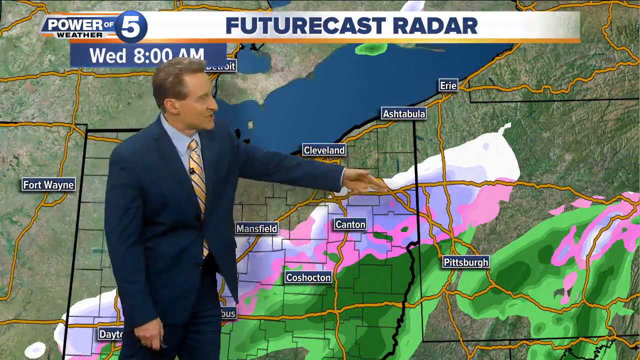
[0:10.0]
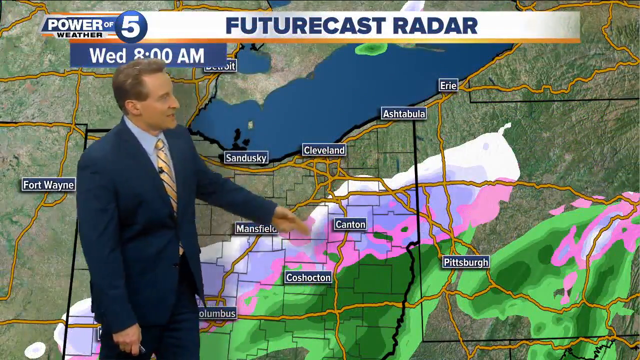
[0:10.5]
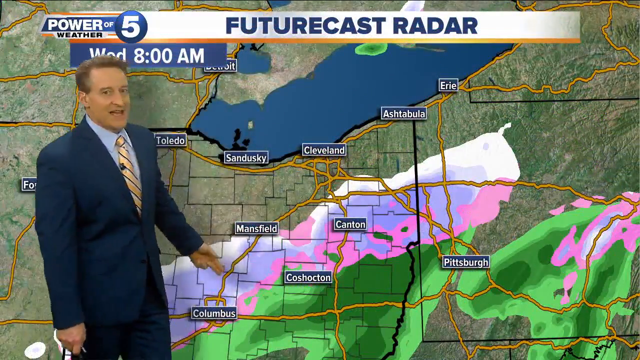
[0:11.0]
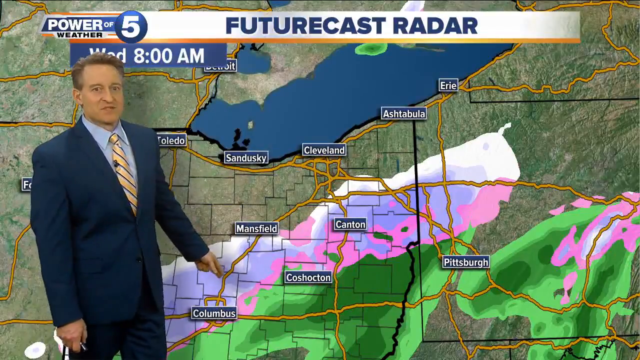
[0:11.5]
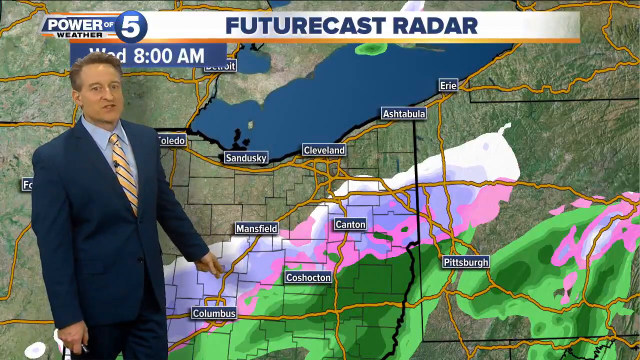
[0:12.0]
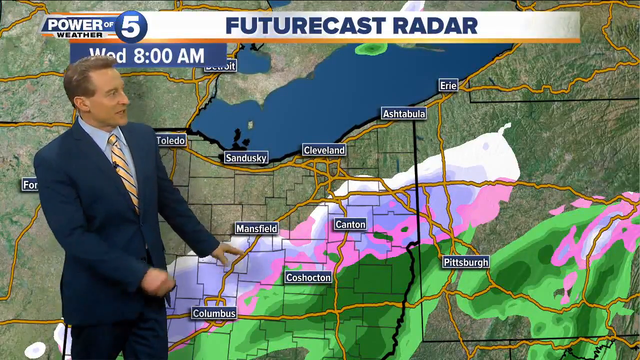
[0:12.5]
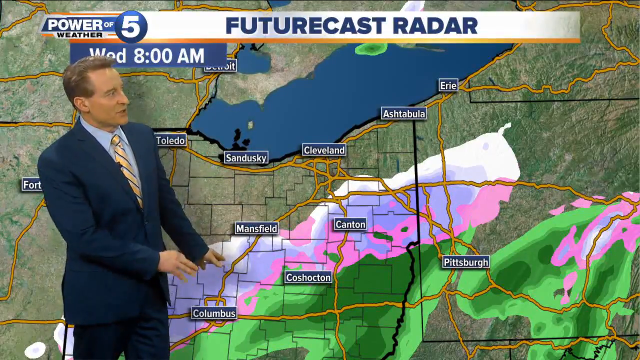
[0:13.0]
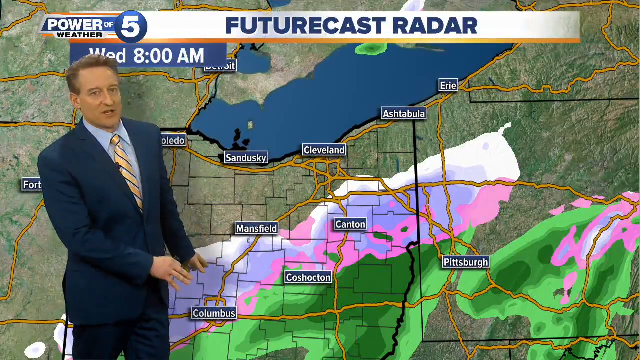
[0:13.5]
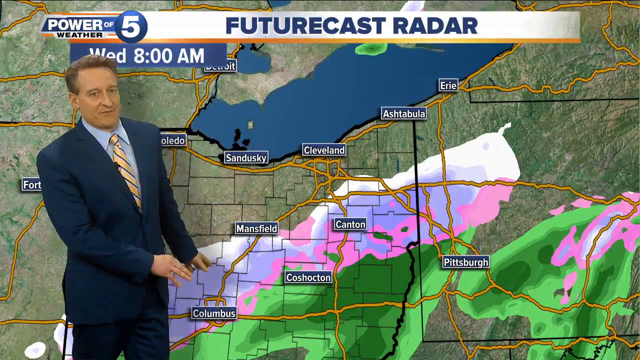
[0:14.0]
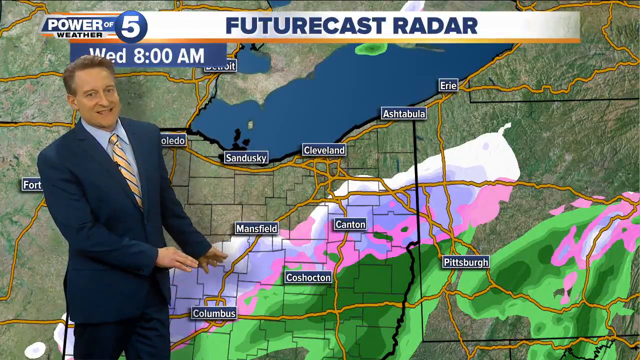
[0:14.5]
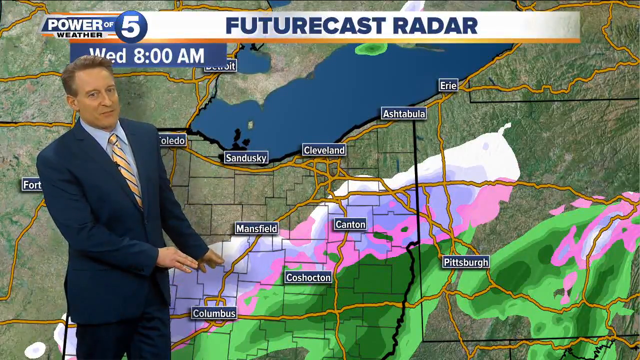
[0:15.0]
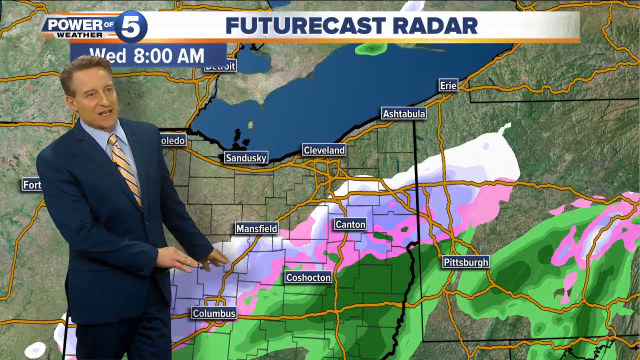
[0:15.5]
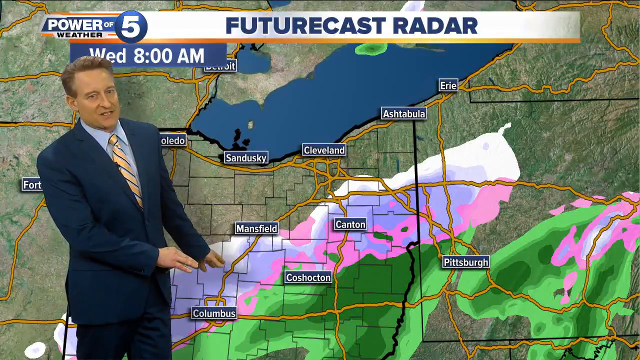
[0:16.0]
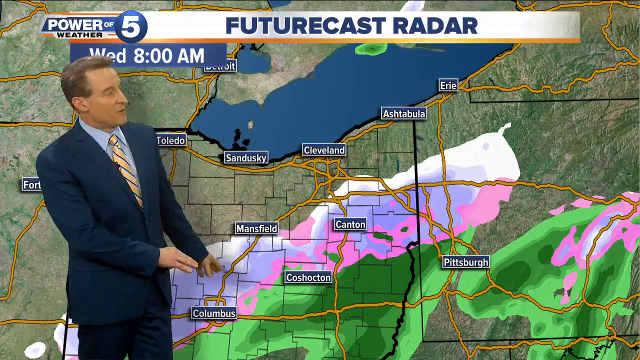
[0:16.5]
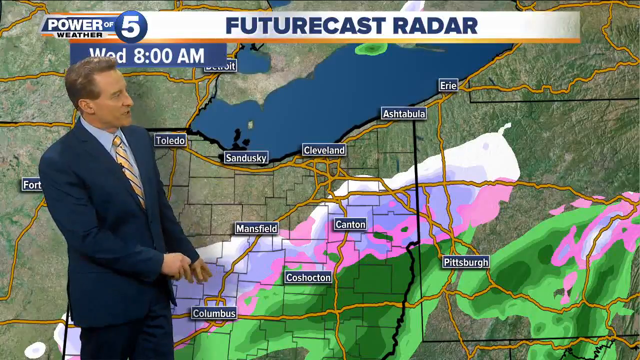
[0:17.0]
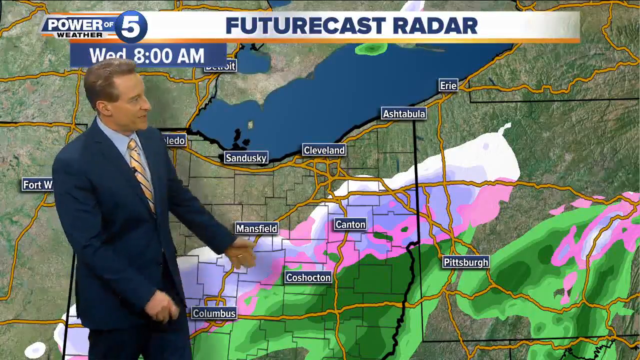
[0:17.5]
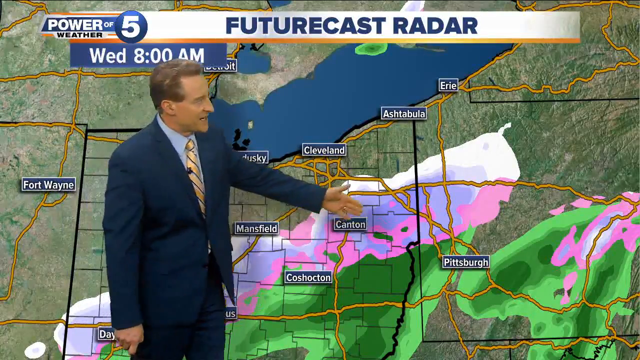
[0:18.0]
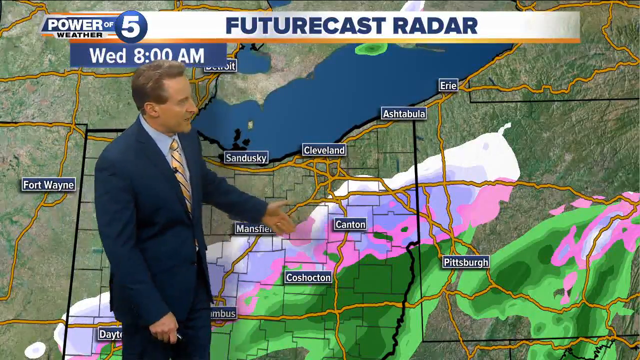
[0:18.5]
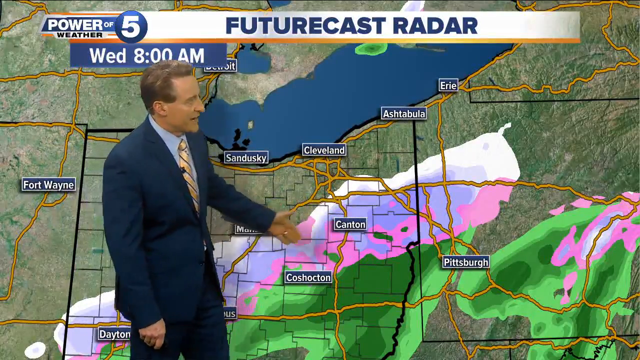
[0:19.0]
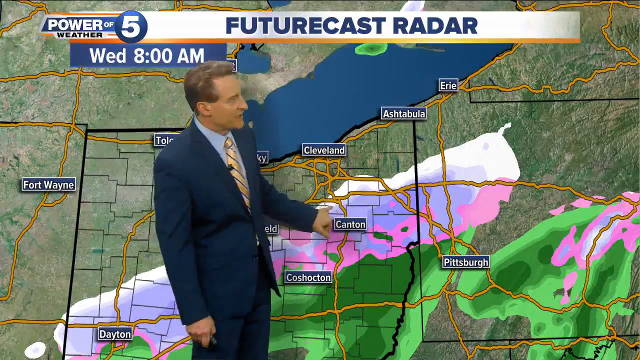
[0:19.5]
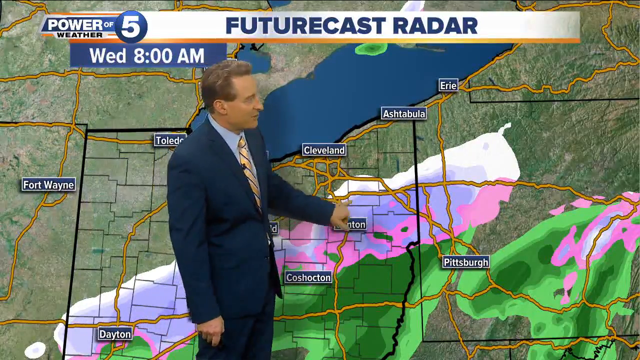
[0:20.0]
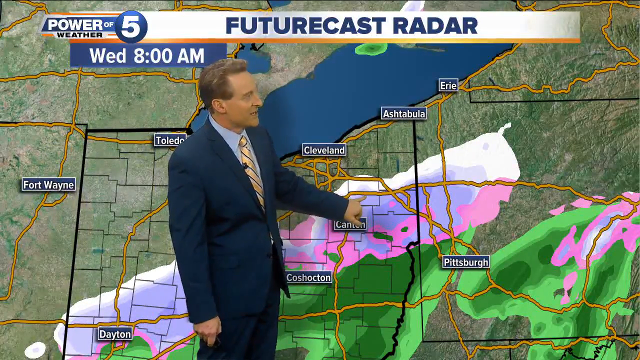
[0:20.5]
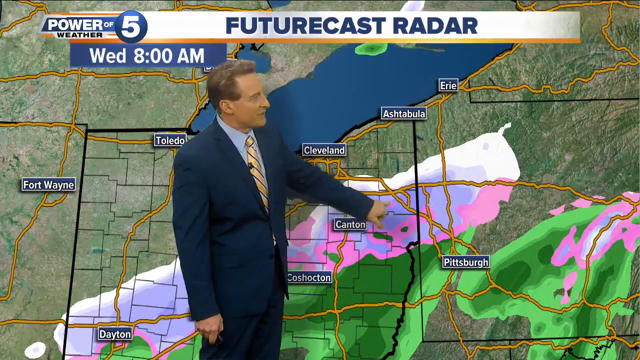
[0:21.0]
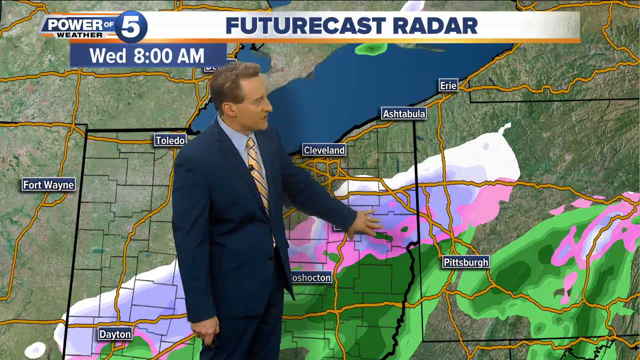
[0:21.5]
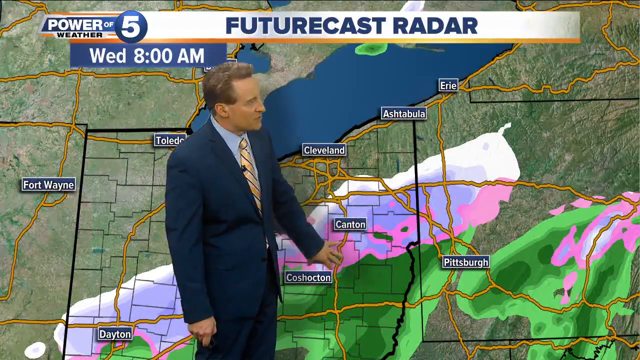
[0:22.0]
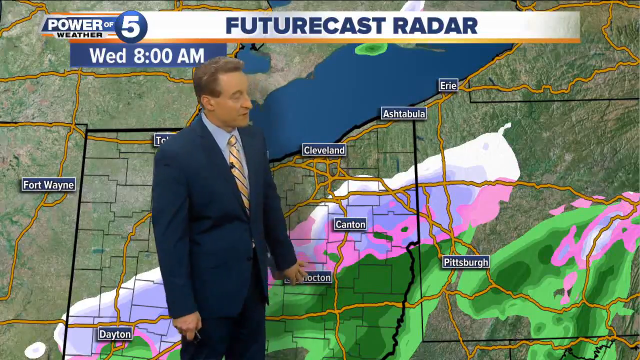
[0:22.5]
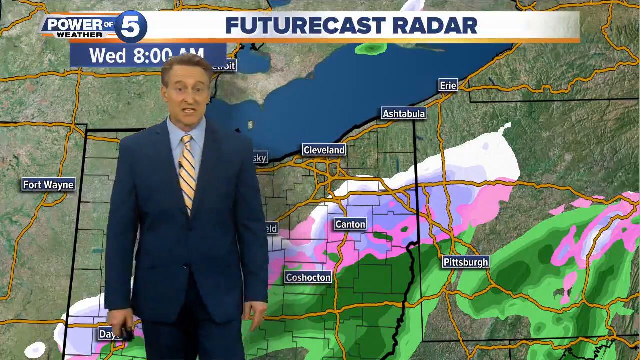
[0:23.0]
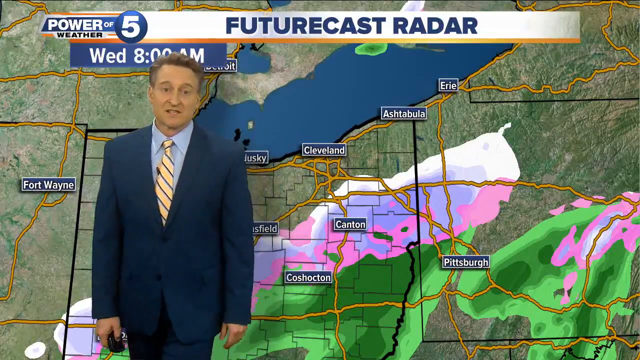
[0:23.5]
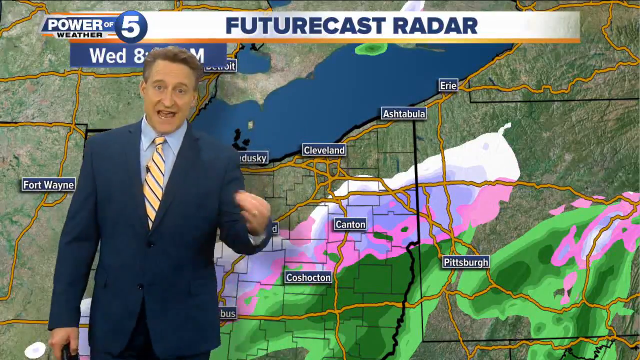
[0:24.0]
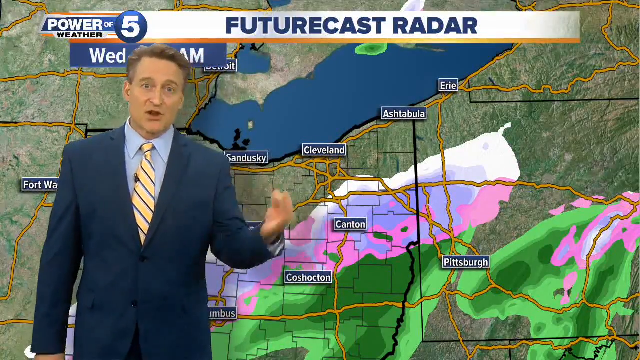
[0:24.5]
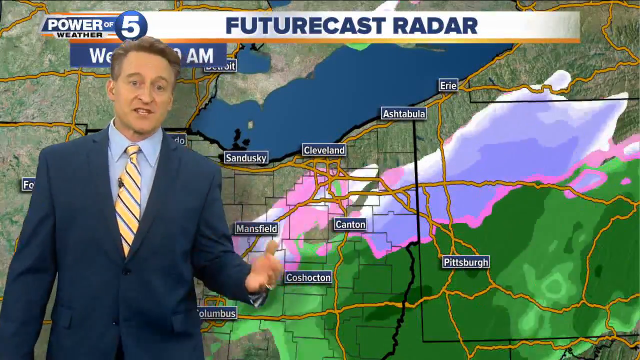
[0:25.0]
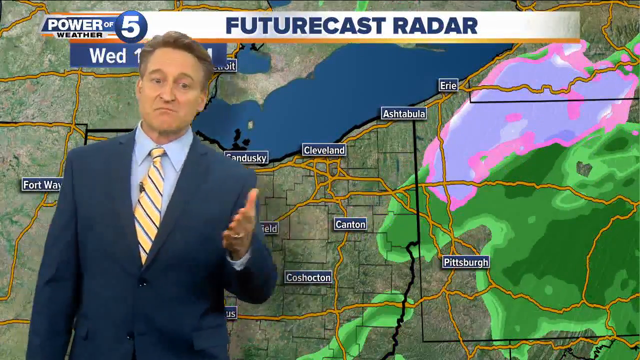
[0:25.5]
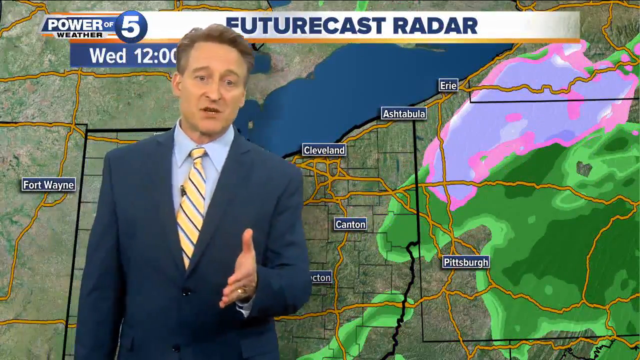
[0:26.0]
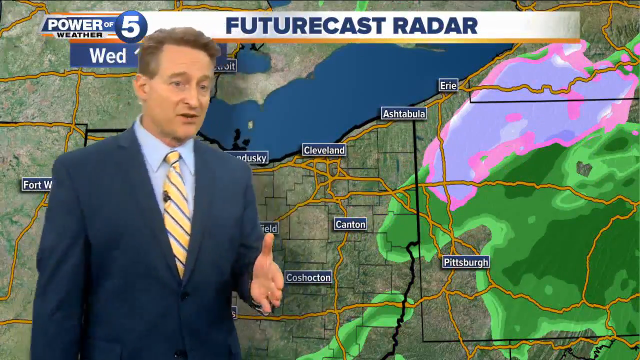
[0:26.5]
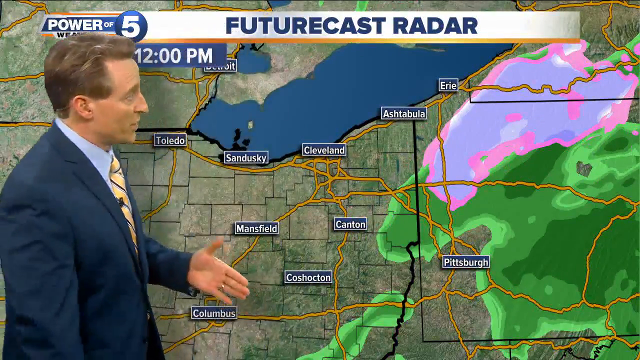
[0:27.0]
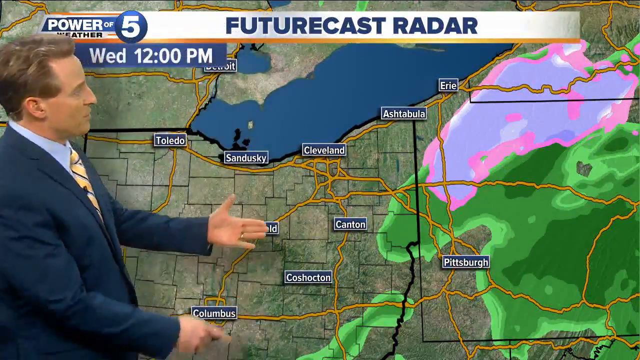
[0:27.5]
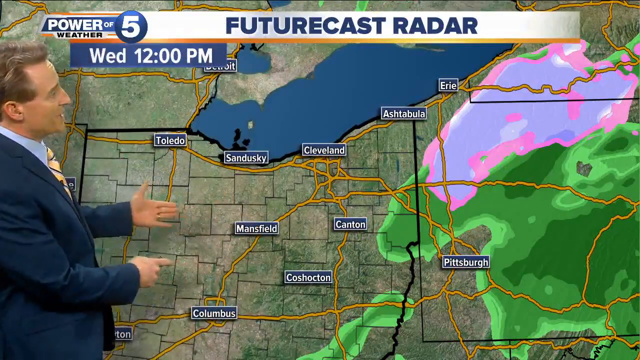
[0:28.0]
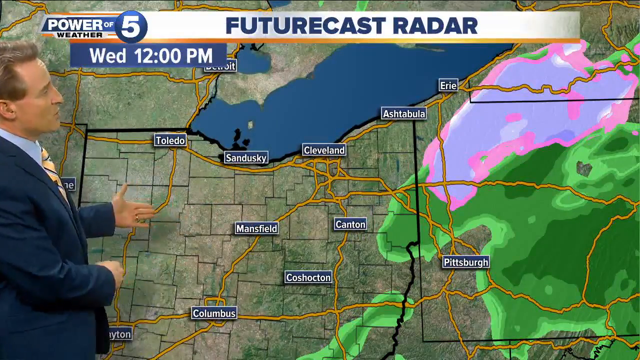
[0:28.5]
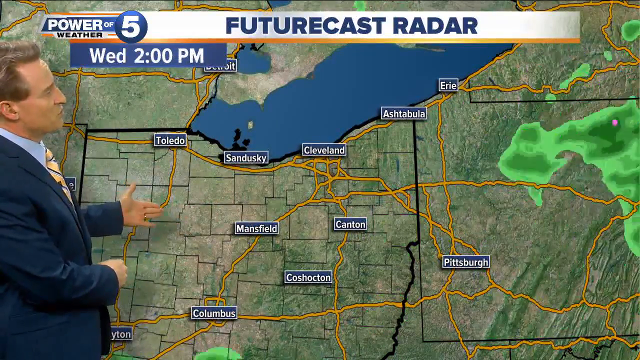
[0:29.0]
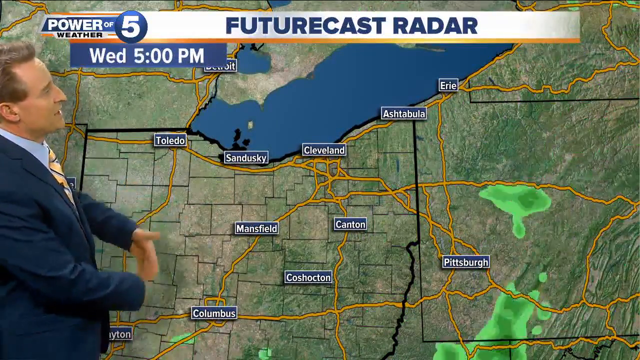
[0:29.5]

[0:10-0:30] A white man who looks like a reporter, wearing a blue suit and a tie, talks about the weather in front of a map of places in the USA. Text at the top reads "Power of Weather 5", "Future Cast Radar" and "Wednesday, 8am". He seems to be talking about Canton, as he keeps moving his hand over that spot, and neighboring places on the map include Pittsburgh, Cleveland, Ashtabula, Erie, Sandusky and Coshocton, among others. The show appears to be called Power of Weather 5 and to be hosted by this man.